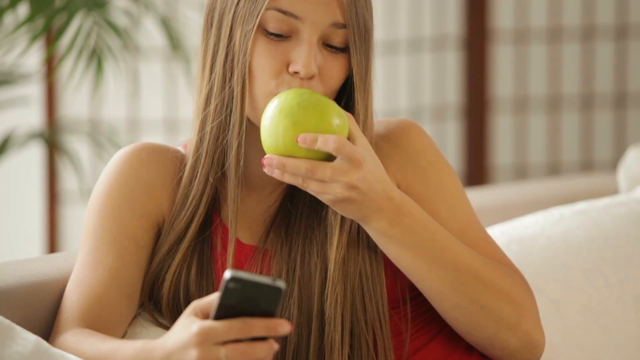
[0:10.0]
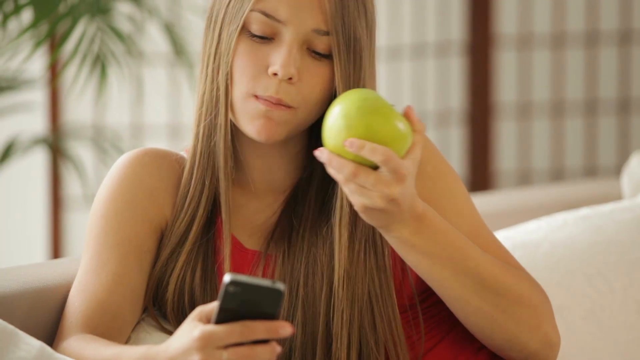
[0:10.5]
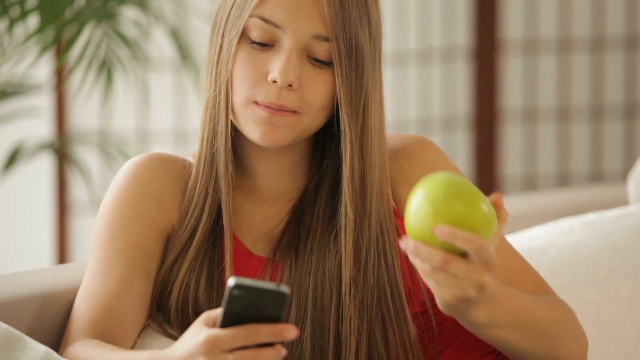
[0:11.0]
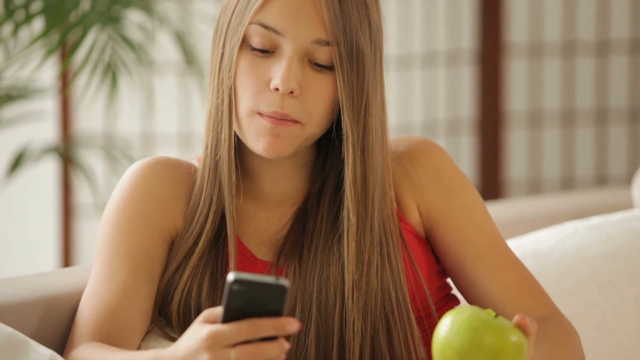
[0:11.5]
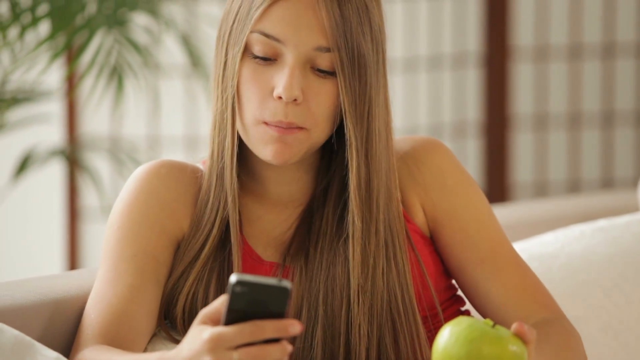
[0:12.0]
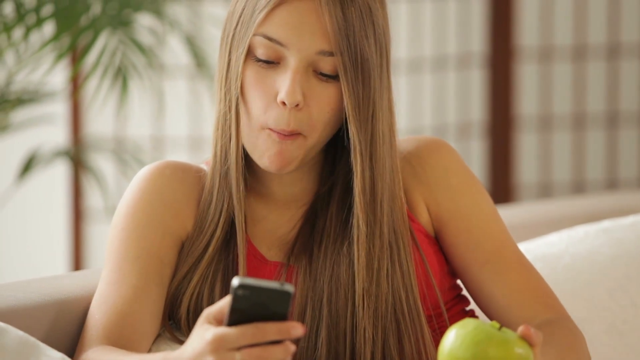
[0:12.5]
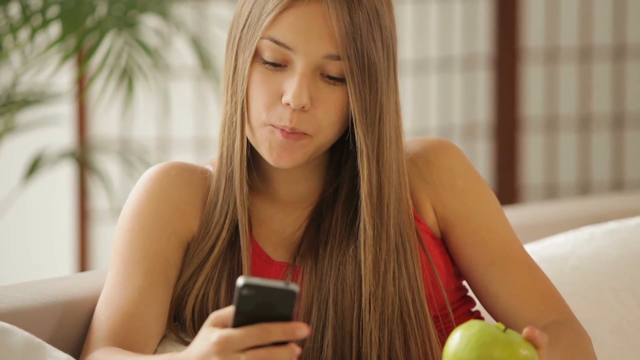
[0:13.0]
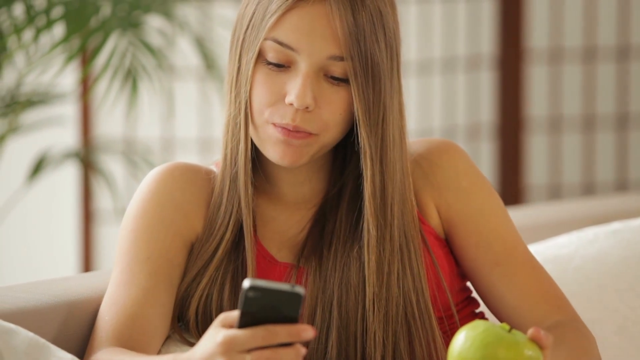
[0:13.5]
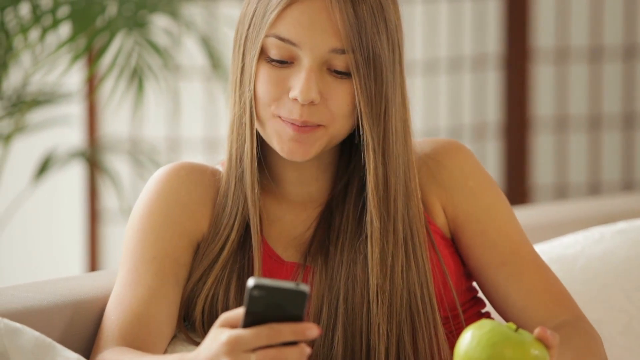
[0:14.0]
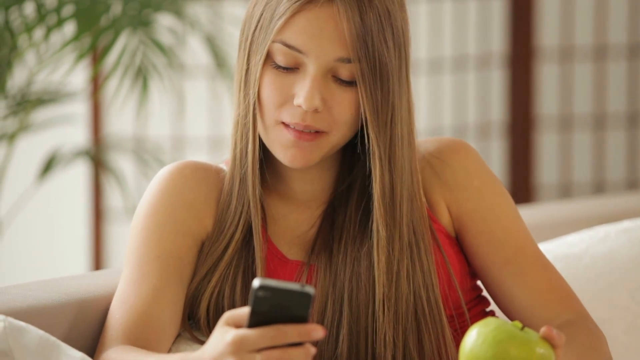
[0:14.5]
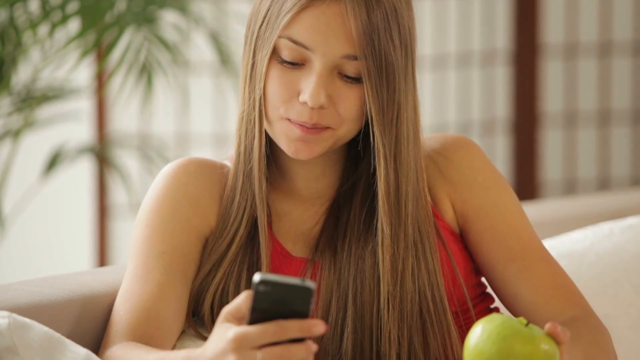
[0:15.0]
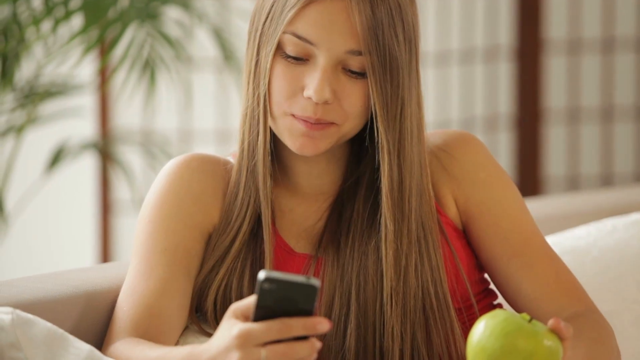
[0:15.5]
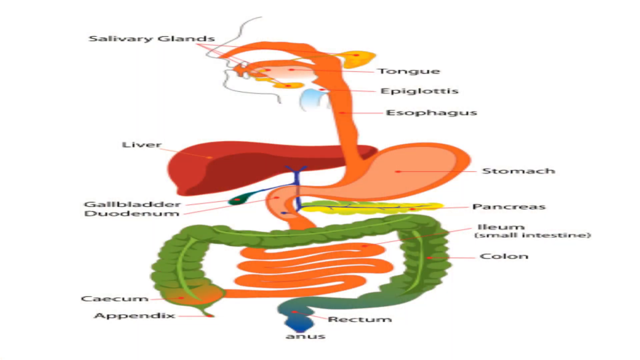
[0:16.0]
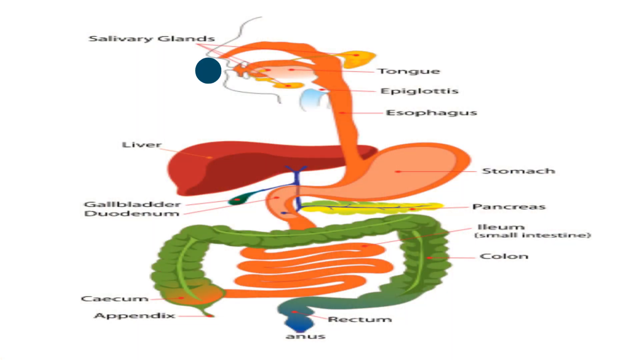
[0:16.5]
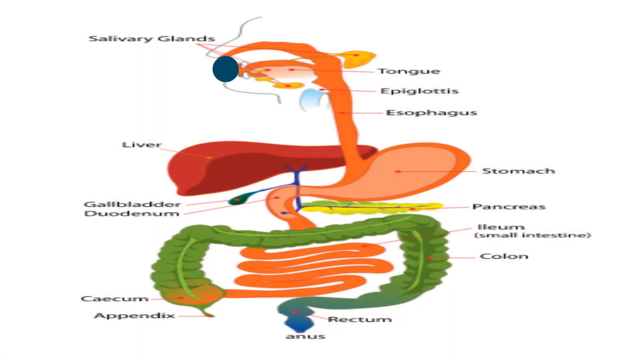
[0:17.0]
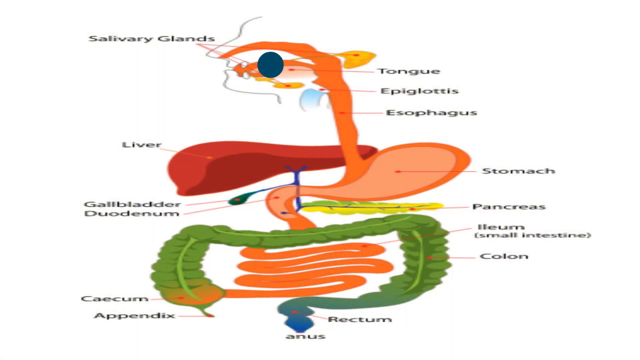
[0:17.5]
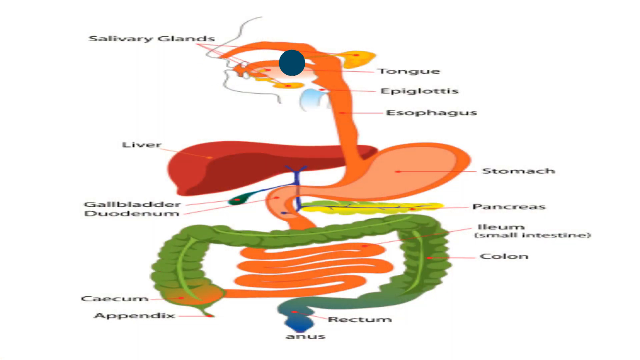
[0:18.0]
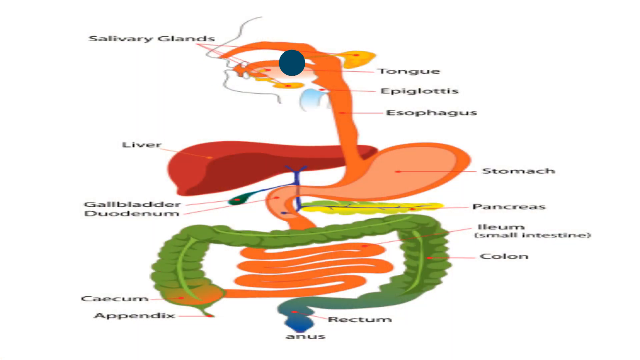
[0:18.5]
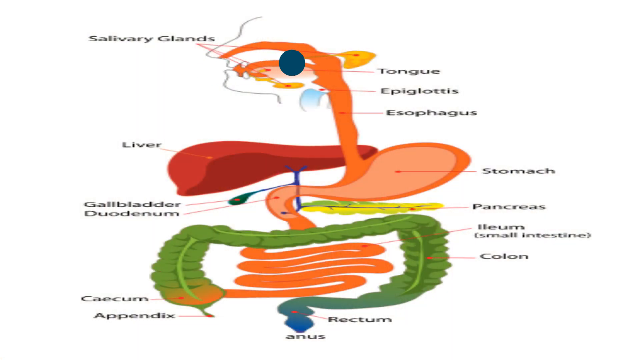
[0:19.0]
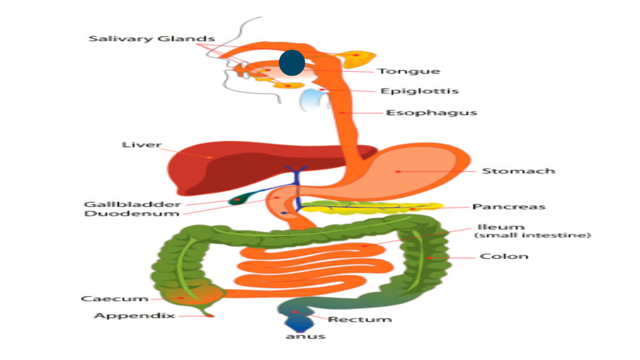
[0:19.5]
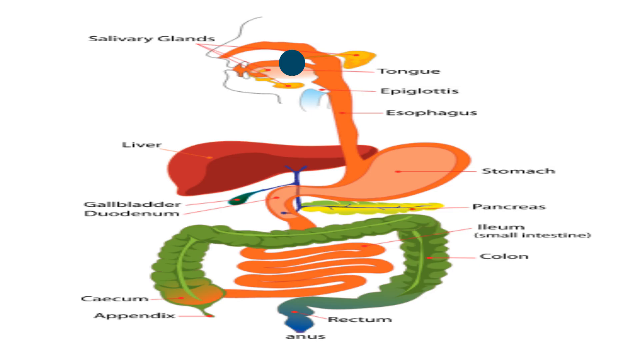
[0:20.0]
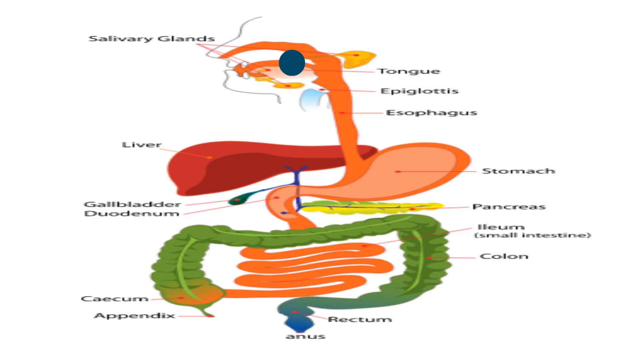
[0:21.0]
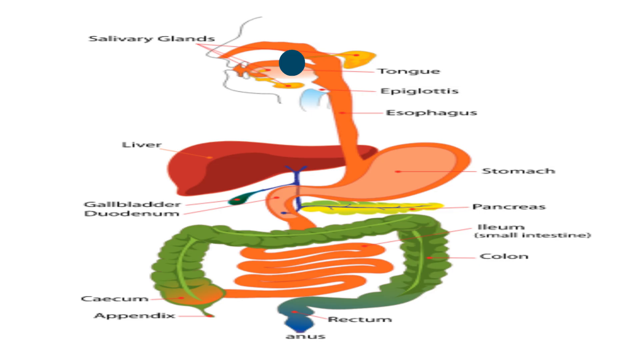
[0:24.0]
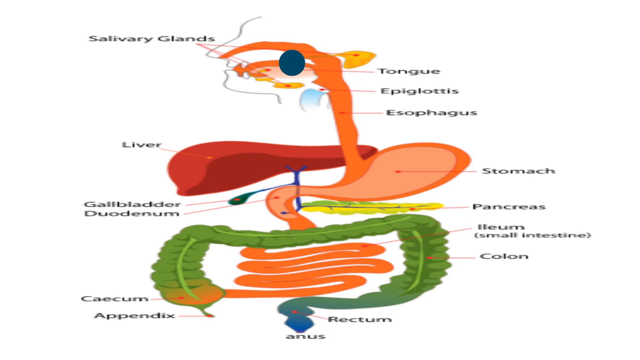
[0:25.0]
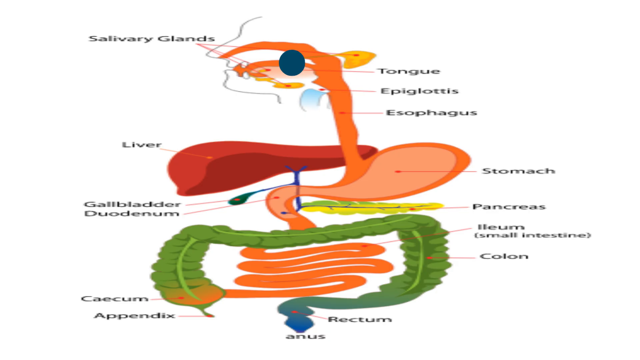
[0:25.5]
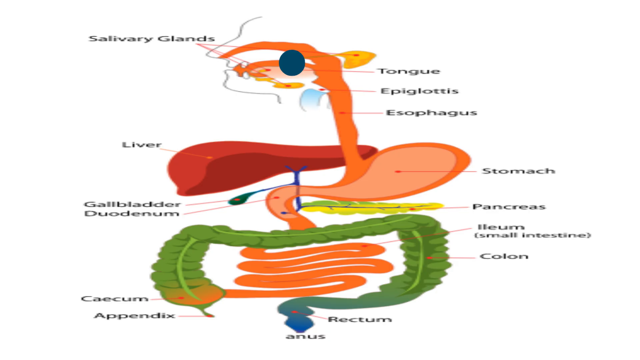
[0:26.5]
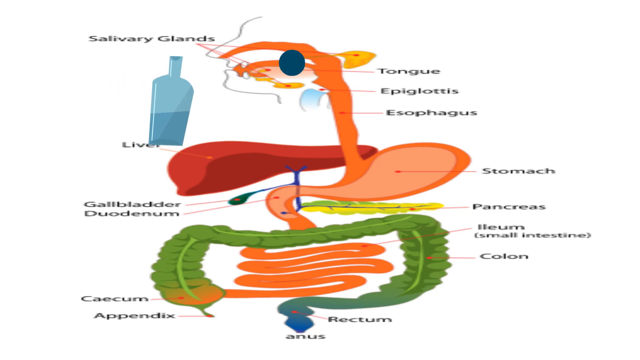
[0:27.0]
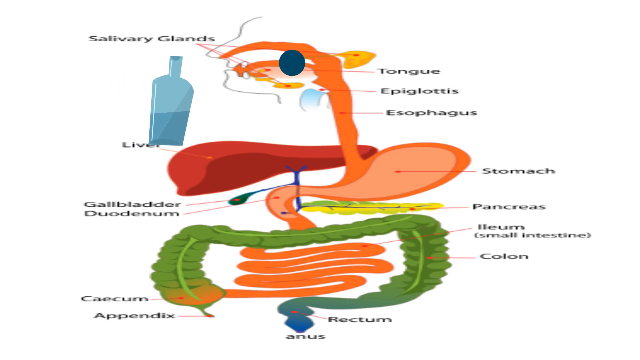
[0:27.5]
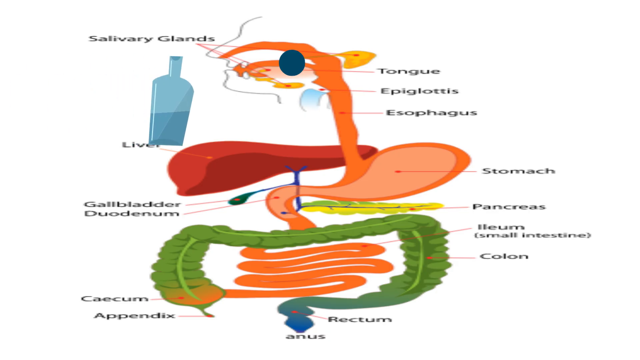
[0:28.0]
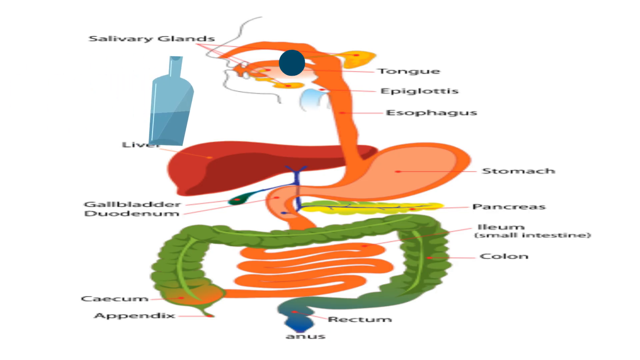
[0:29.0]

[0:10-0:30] A girl bites a yellow apple held in her left hand. She has brown, quite light, long hair that falls on her chest and wears a red shirt. After biting the apple, she looks at the cell phone in her right hand. Then an image of a digestive system is shown, with several internal organs colored differently from each other, along with elements that help explain the operation and names of the various components. A cursor that looks like a blue circle stays still at the top of the screen, at the drawing of the oral cavity. At a certain point an illustration of a bottle of water appears, moving quite fluidly in from the left end of the frame and stopping almost in the center.